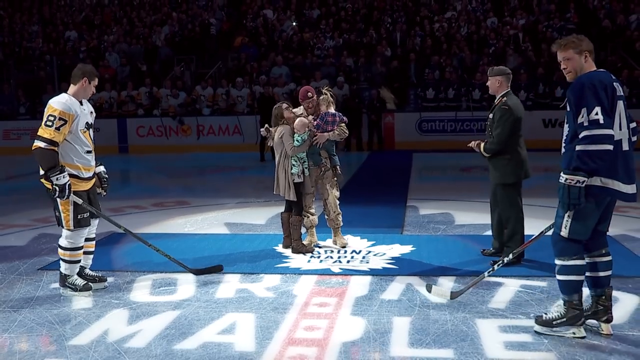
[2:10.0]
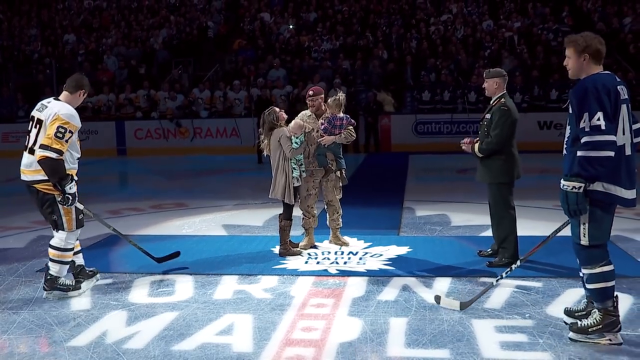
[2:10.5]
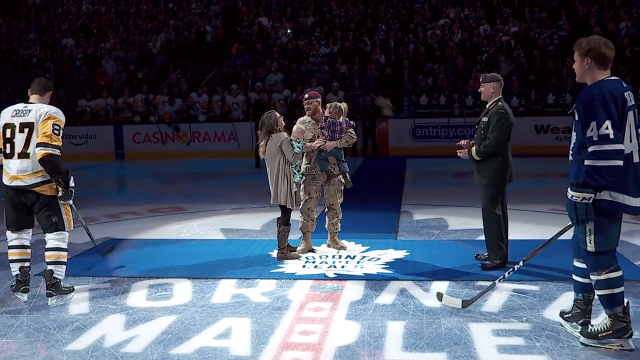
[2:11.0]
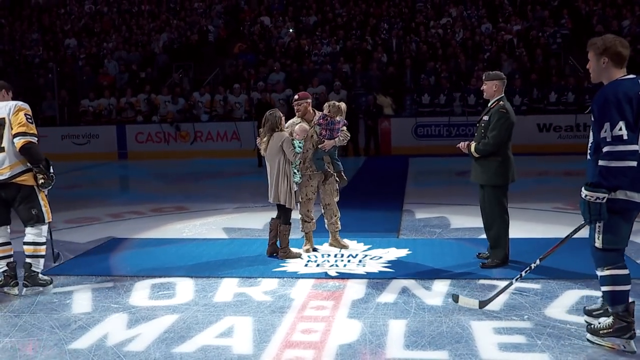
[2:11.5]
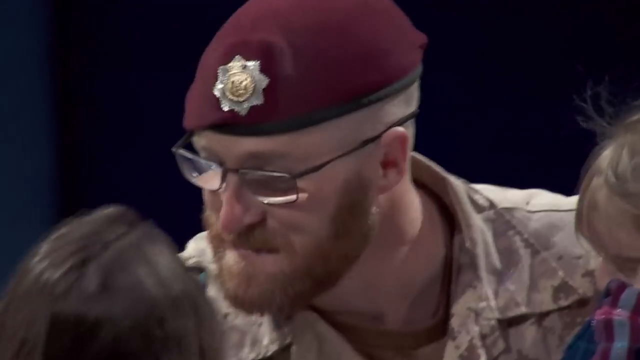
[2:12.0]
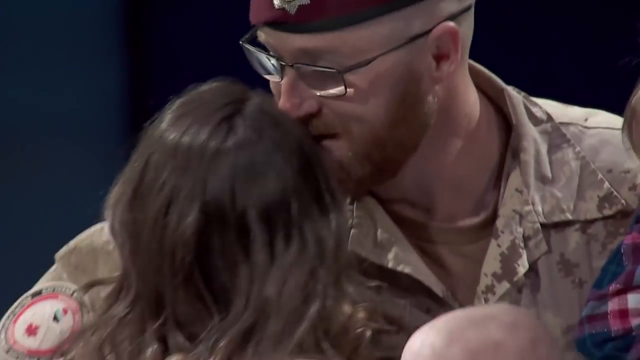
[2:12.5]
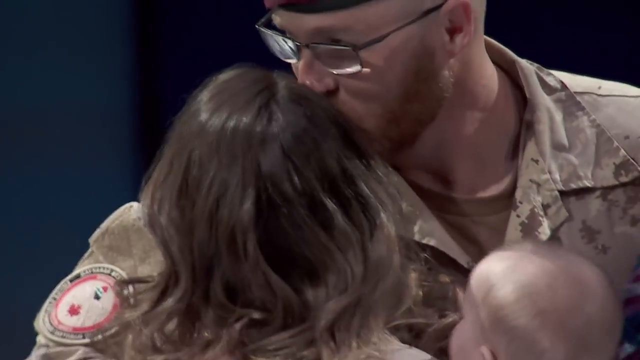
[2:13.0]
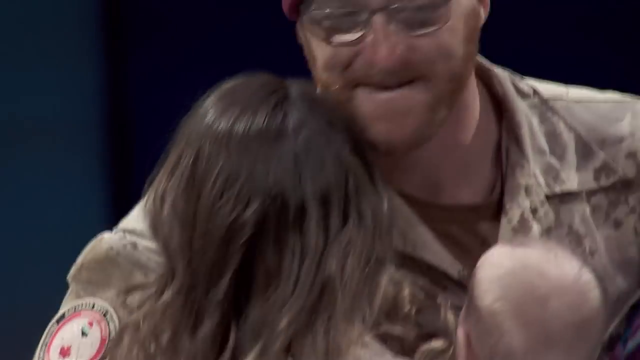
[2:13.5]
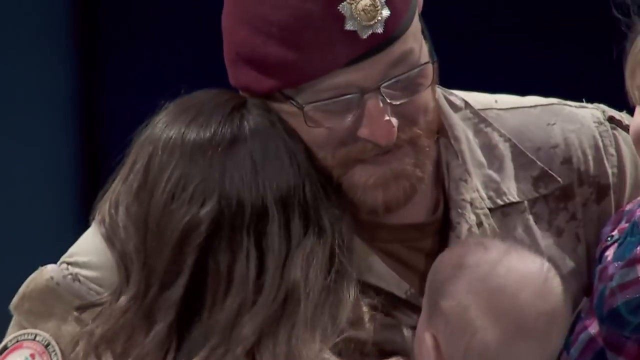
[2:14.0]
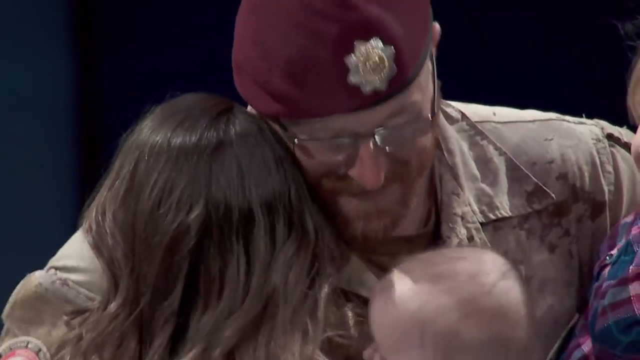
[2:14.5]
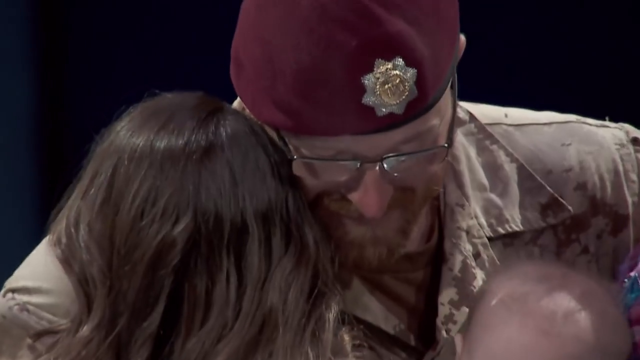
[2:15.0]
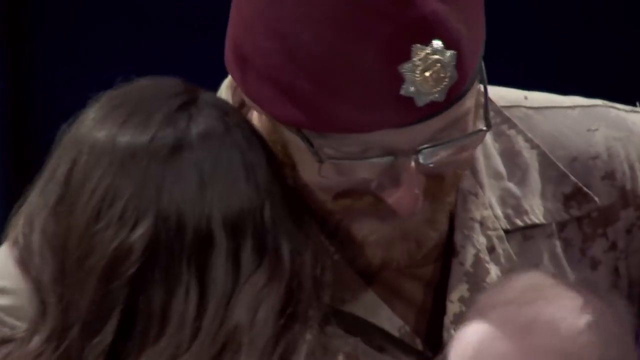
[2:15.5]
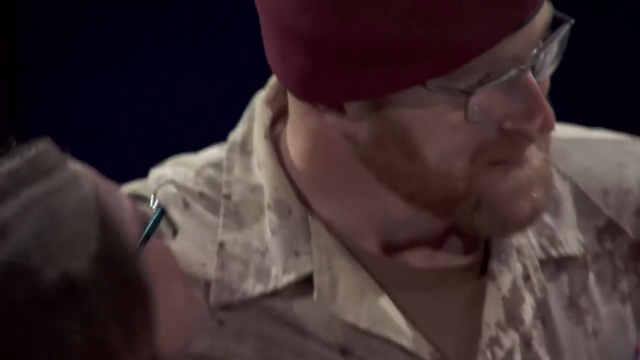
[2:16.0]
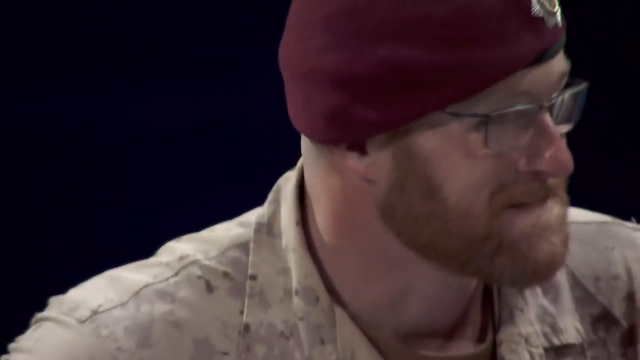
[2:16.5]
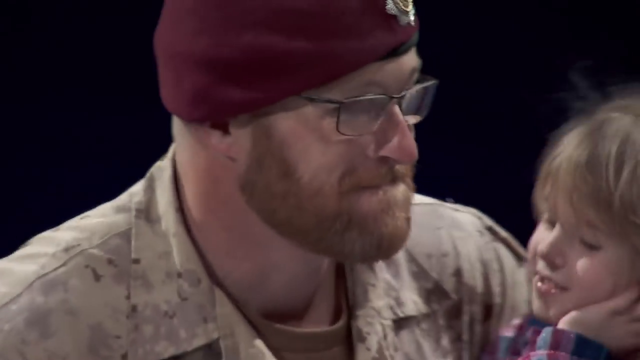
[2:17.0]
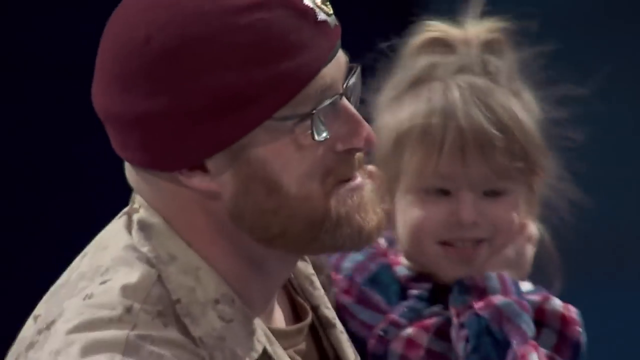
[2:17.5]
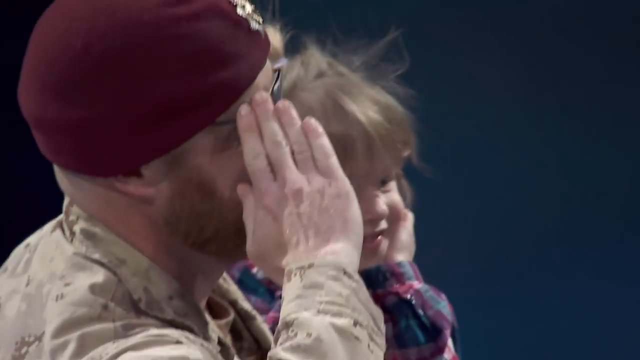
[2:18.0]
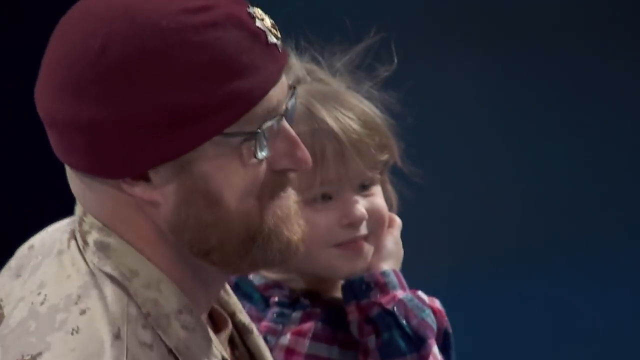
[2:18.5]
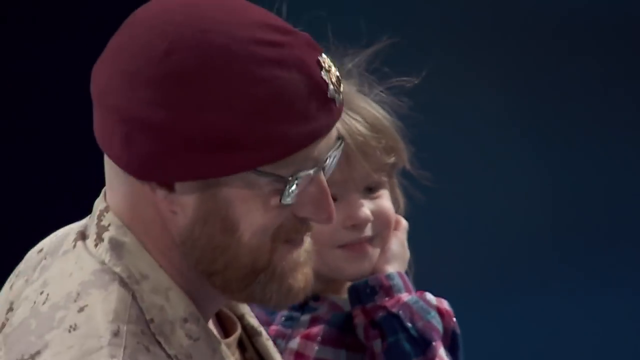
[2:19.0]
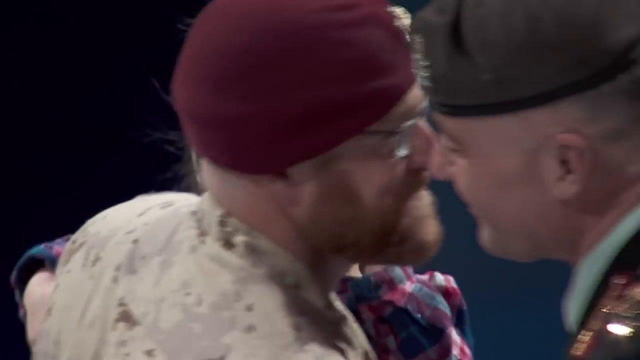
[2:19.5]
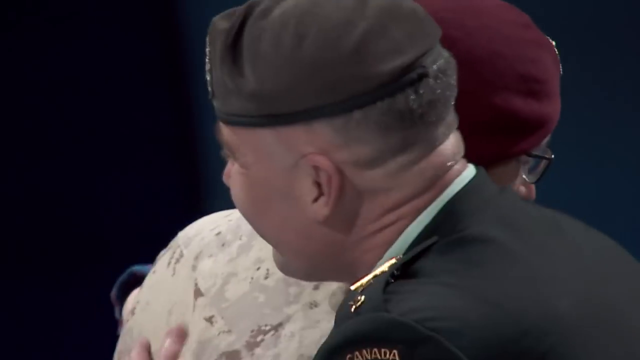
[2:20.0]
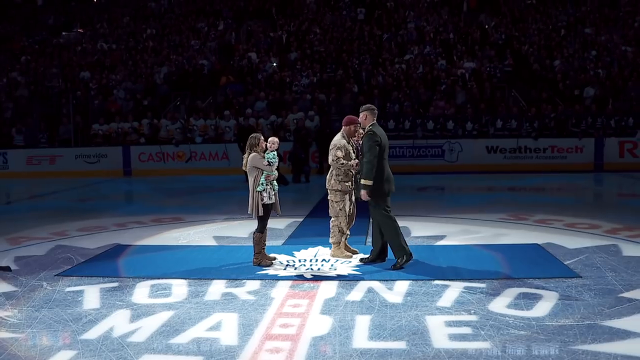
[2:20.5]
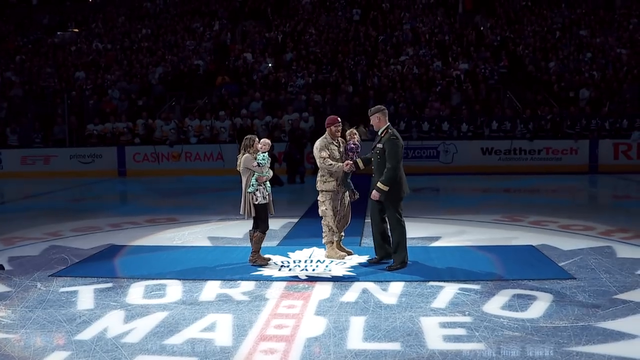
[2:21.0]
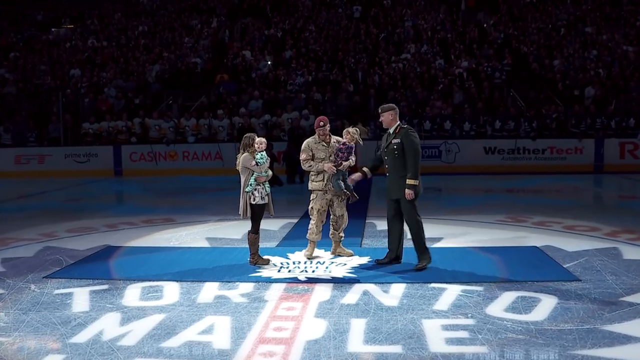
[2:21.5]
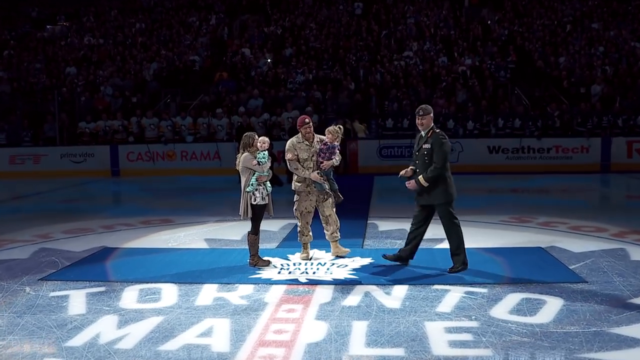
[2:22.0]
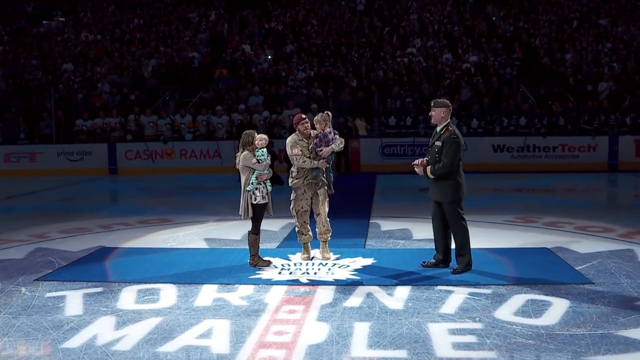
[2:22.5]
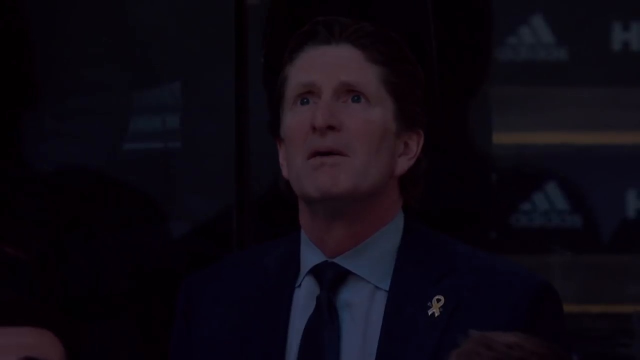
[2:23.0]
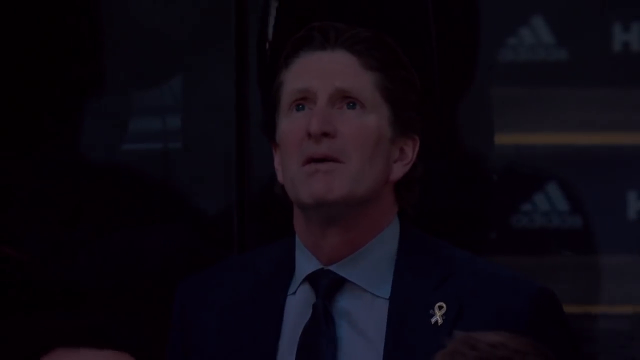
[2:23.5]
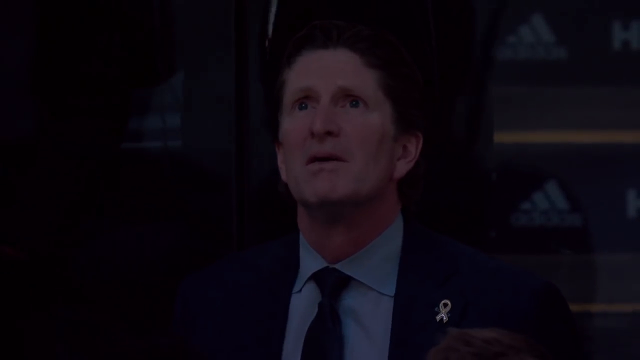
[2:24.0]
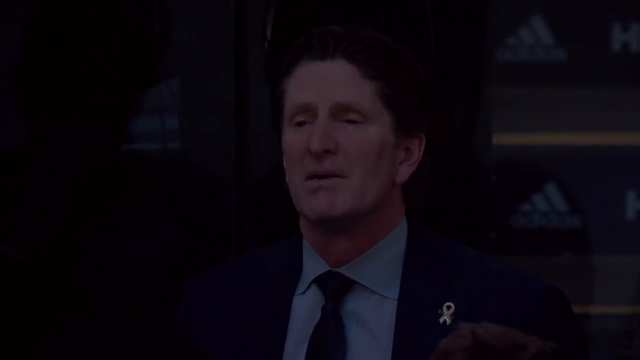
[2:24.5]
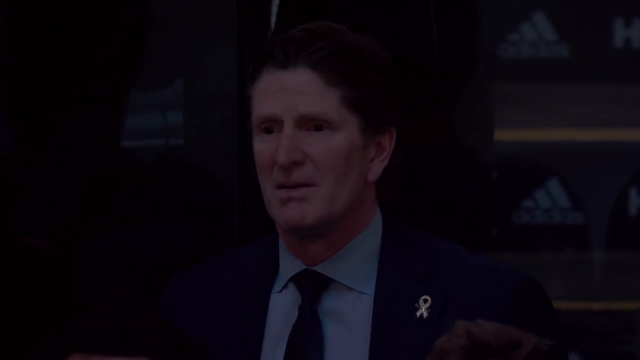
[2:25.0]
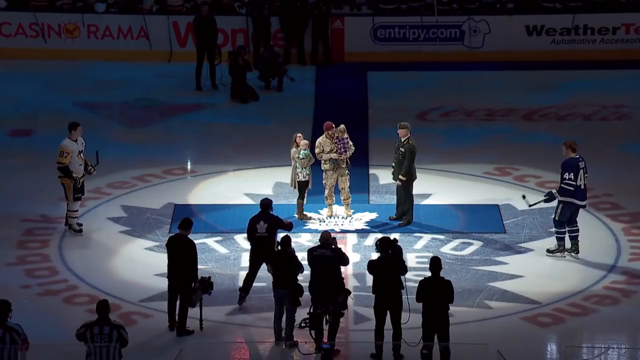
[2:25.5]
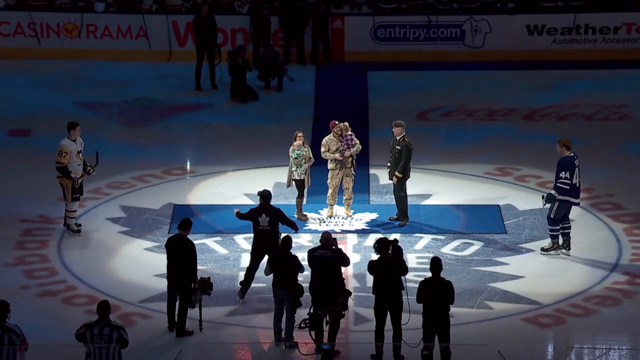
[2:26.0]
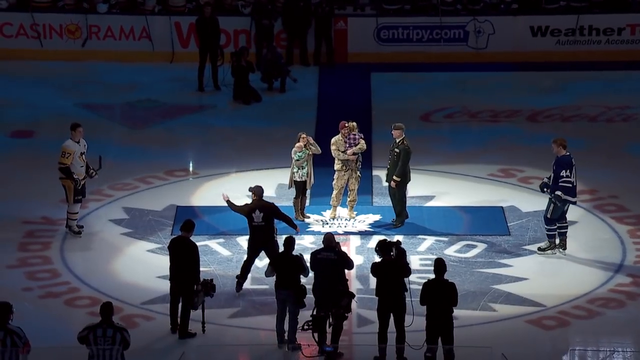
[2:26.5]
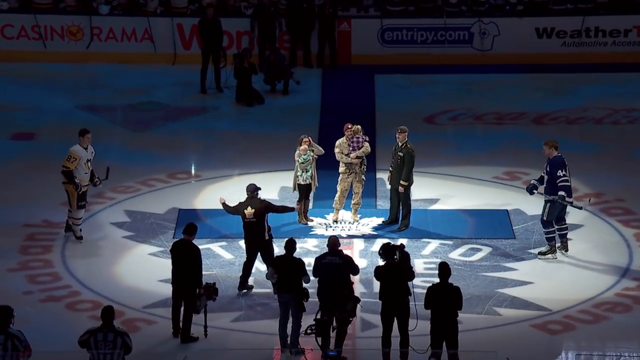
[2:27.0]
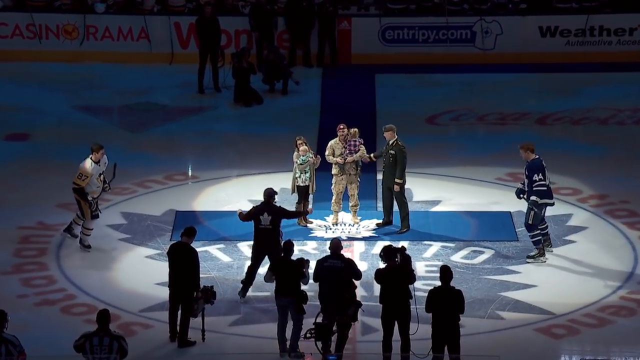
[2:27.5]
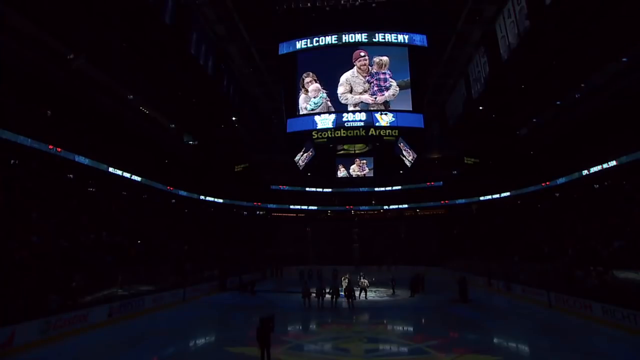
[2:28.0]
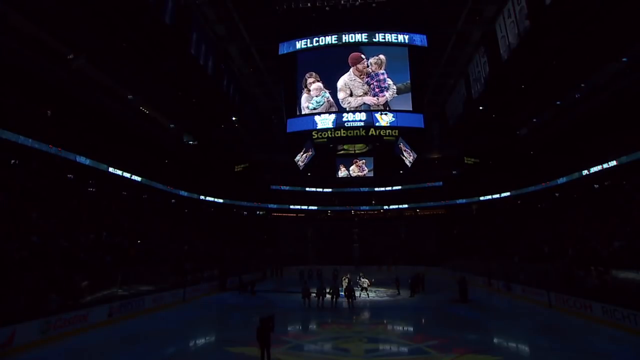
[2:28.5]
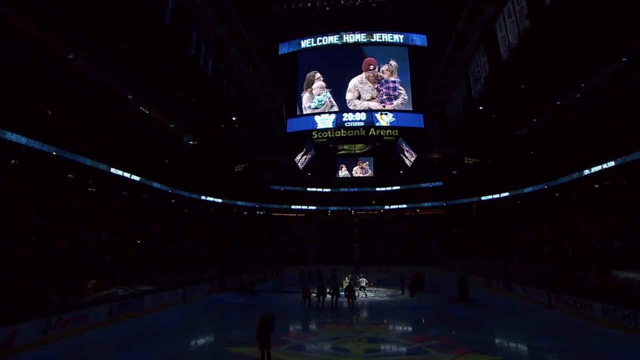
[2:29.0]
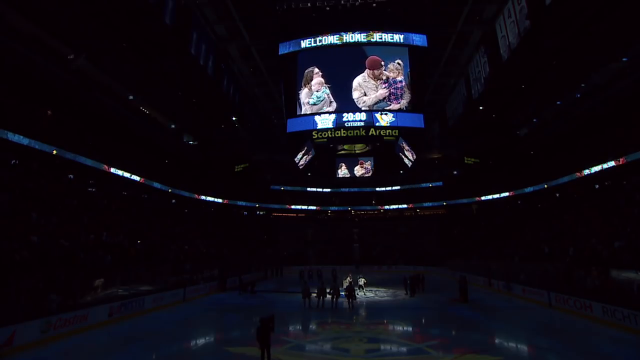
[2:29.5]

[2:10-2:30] Sidney stands on the left holding his hockey stick in his right hand, and the player on the right in the number 44 Maple Leafs jersey is turned to the left. The family of four is in the middle: the dad holds the older child and the mom holds the baby in her right arm. The older gentleman on the right is turned toward them, looking at them and clapping. The dad kisses her again, hugging against the side of her face, and gives a salute to the other soldier, who comes in close; they shake hands and share a one-arm hug before the dad rejoins his family. Babcock, apparently the Maple Leafs coach, looks up and seems a little teary. A man in a black Maple Leafs coat motions with his hand for both hockey players to come closer. The teleprompter now shows "welcome home Jeremy" on a banner above the screen. The fans are clapping excitedly.